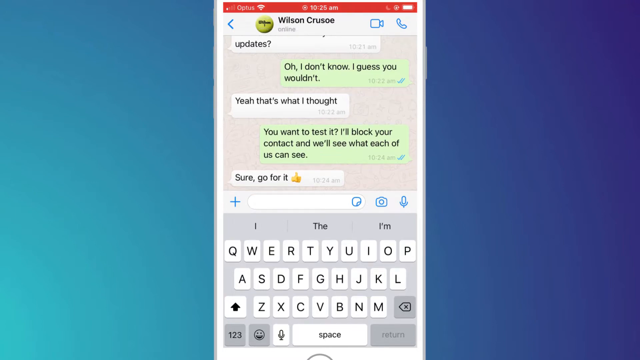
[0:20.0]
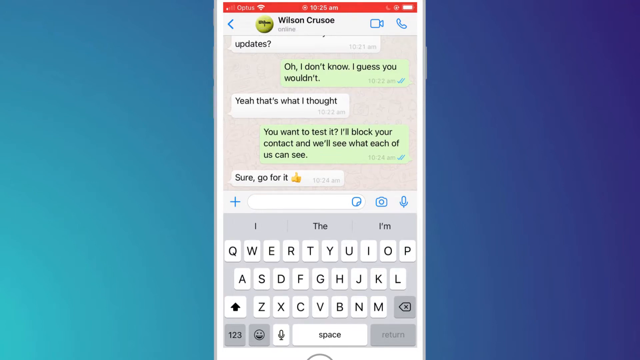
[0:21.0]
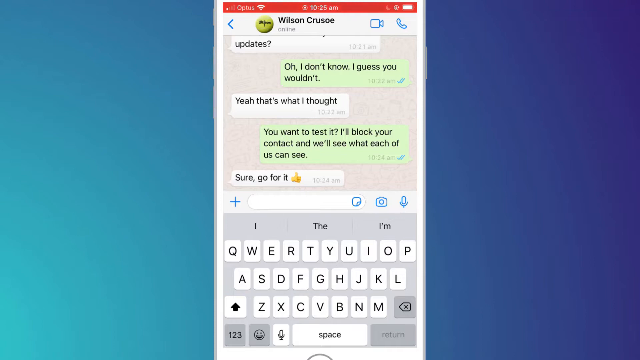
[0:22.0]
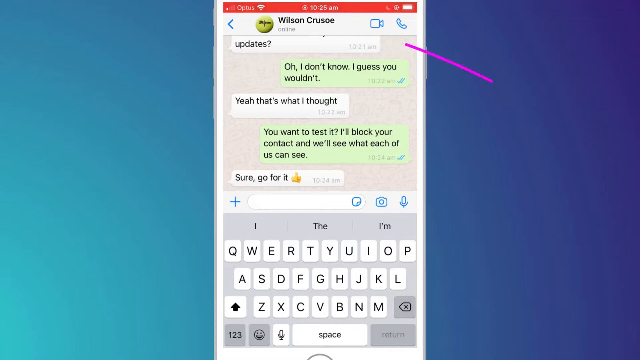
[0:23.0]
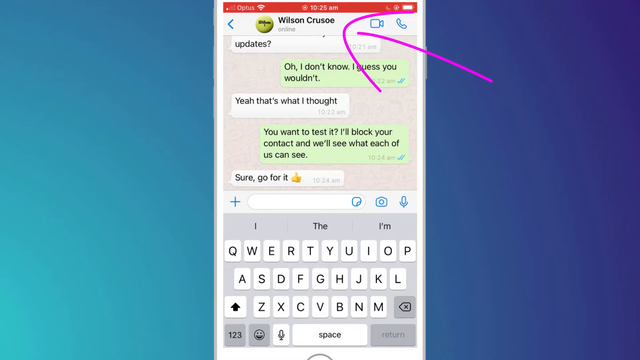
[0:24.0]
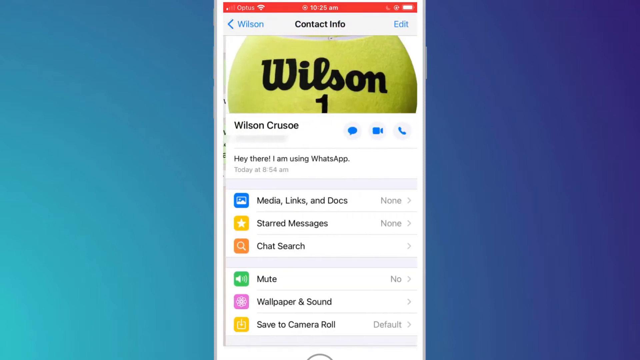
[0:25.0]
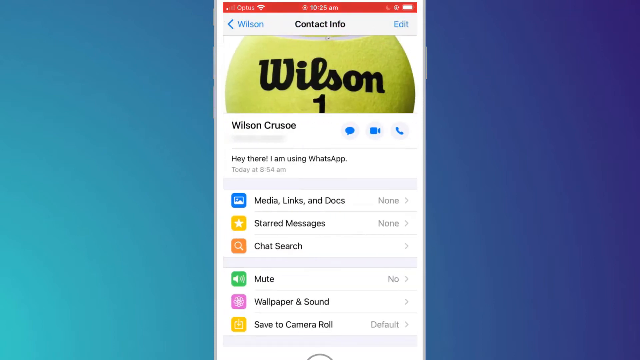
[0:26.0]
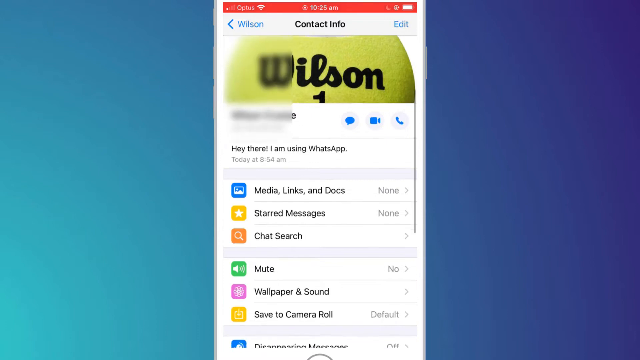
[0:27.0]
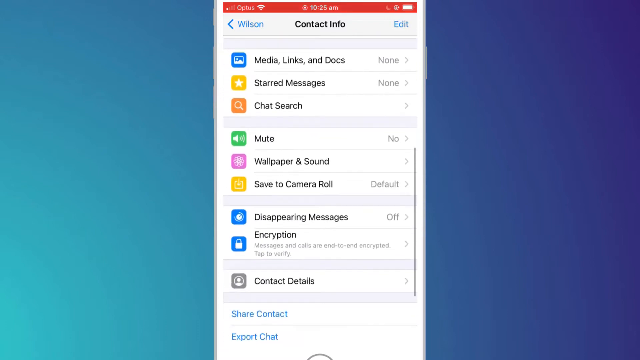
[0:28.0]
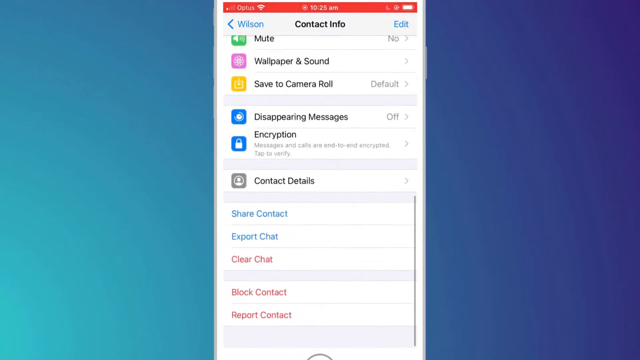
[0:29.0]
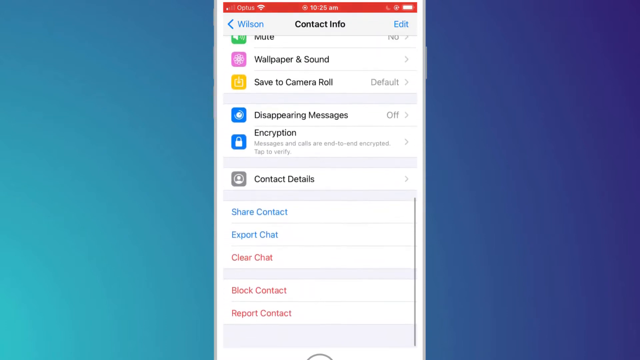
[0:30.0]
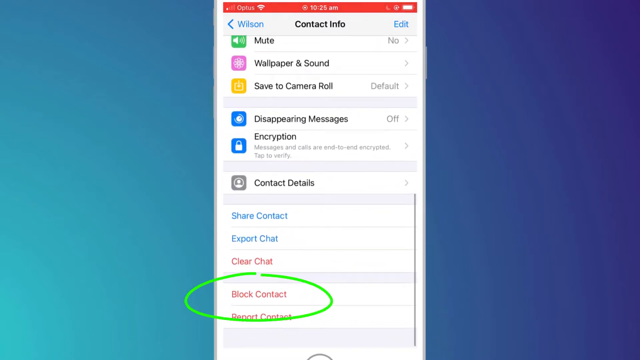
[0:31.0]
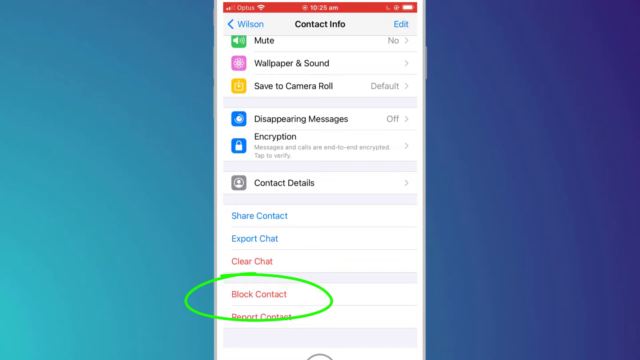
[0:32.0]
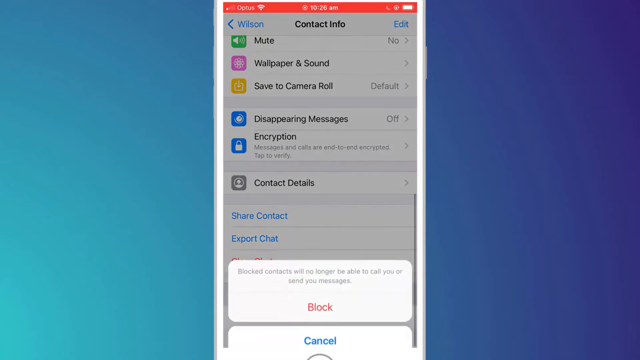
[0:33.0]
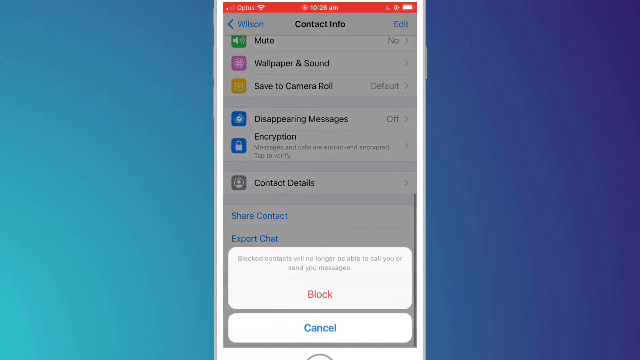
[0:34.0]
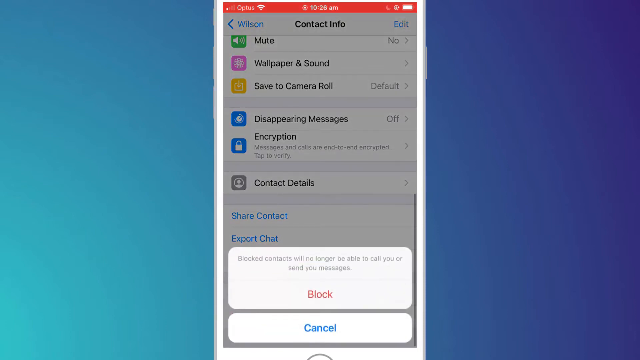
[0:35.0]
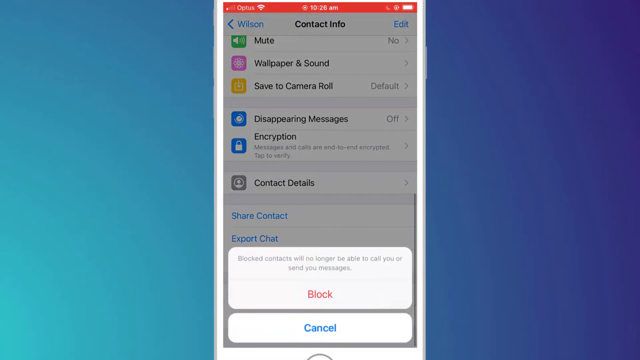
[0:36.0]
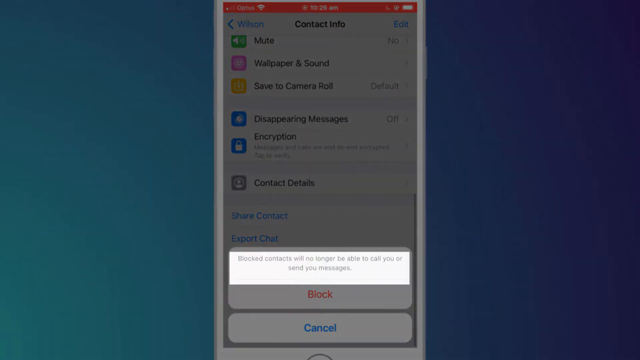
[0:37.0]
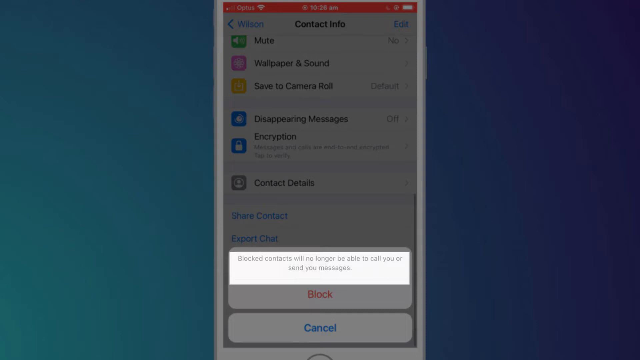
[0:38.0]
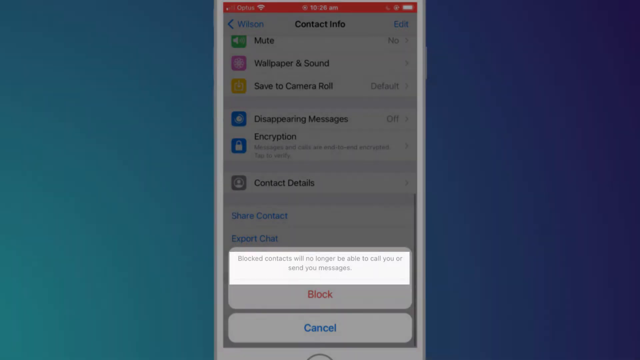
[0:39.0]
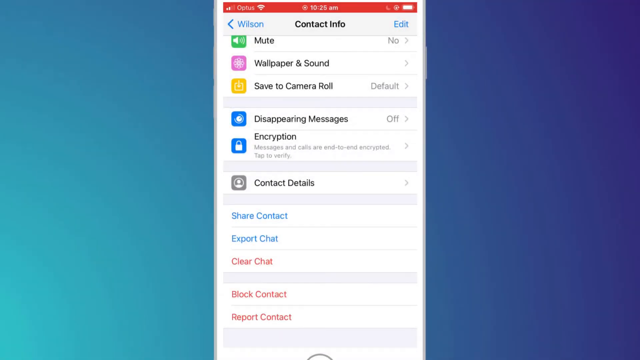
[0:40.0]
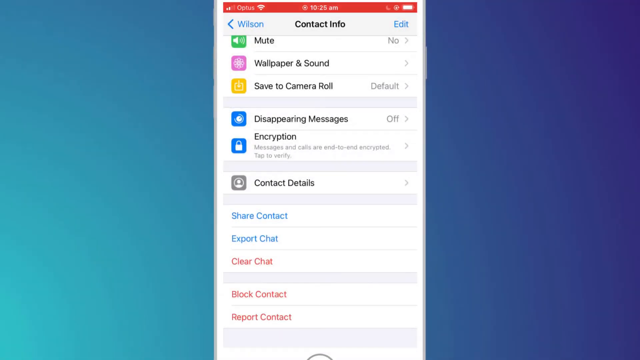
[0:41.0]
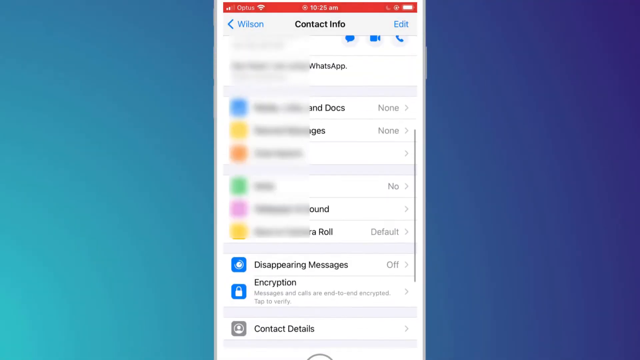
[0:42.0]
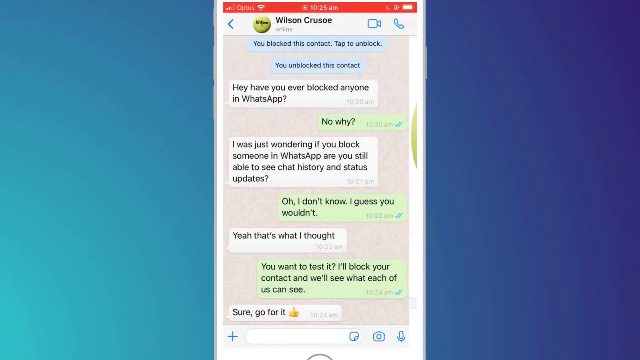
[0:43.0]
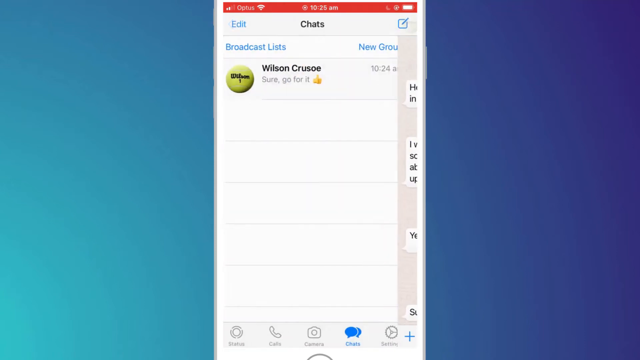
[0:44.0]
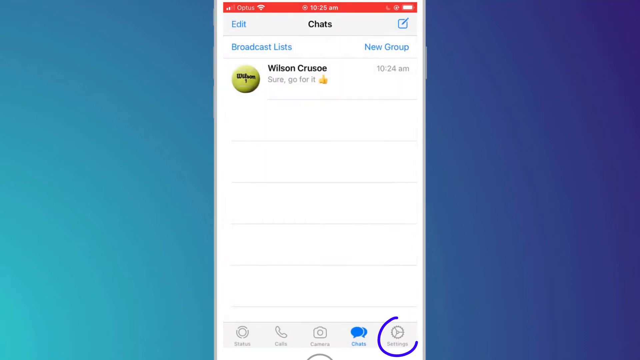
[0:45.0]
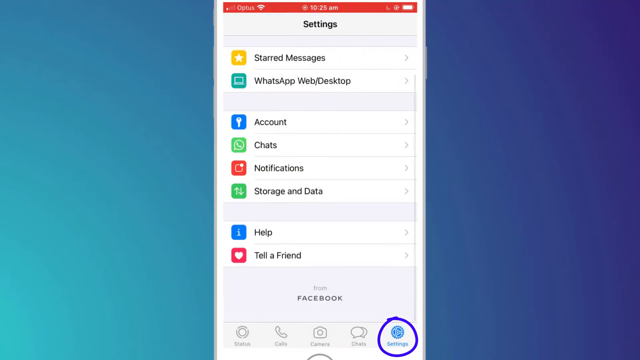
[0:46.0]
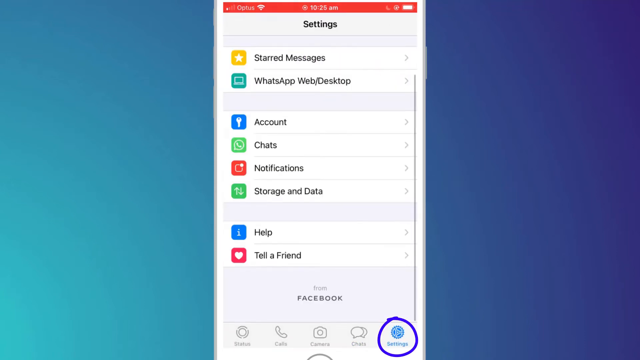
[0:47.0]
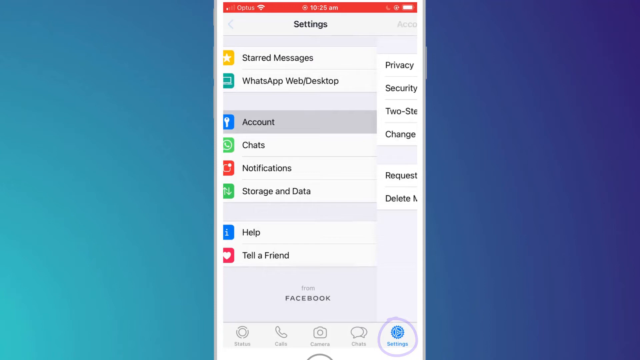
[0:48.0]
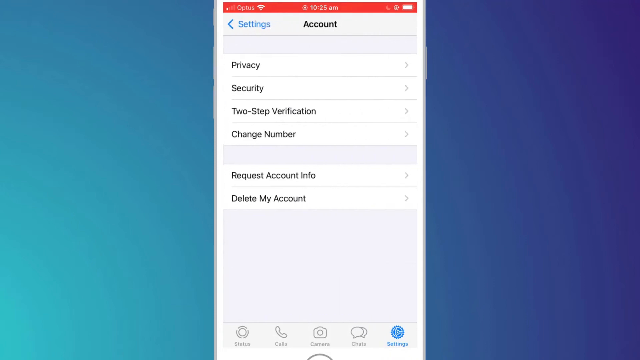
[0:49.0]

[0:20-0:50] An illustrated phone screen is shown on a blue background that is lighter blue on the left of the phone and darker blue on the right. The screen shows the contact "Wilson Crusoe", with a back button to the left of the name and video and call buttons to the right. The conversation reads "updates??", answered by "oh, I don't know. I guess you wouldn't.", then "yeah, that's what I thought." The other person writes "you want to test it, I'll block your contact and we'll see what each of us can see", and the reply is "sure, go for it" with a thumbs up. The keyboard is open and a blue line blinks in the text field. A purple arrow is drawn up to the person's name. The phone switches to contact information, which scrolls down to "block contact", circled in green. A block prompt comes up, and "block contacts will no longer be able to call you or send you messages" is highlighted while the rest of the screen darkens. The screen returns to normal, scrolls back up to the top, and goes back to the conversation. Then a screen shows "Wilson Crusoe", with "broadcast list" above it, "edit" above that, and "new group" to the right of "broadcast list". The typical phone icons are at the bottom, and on the right a play button is surrounded by a purple circle. The view changes to a different screen, then to a settings screen where "privacy" is circled in green.